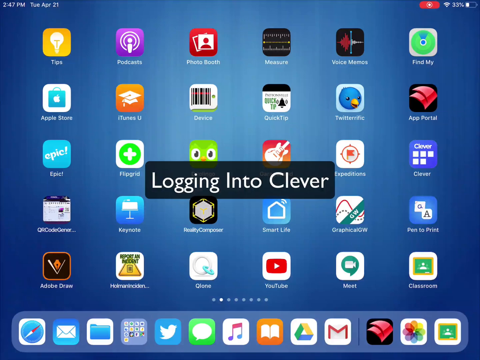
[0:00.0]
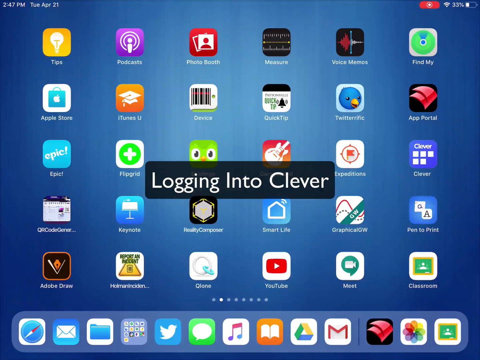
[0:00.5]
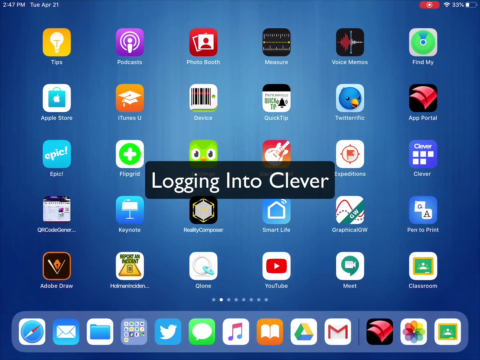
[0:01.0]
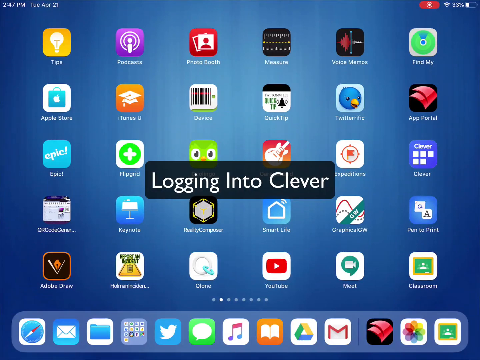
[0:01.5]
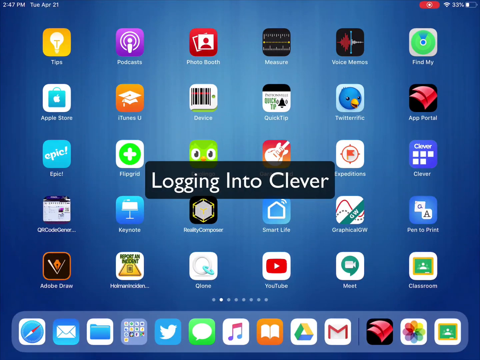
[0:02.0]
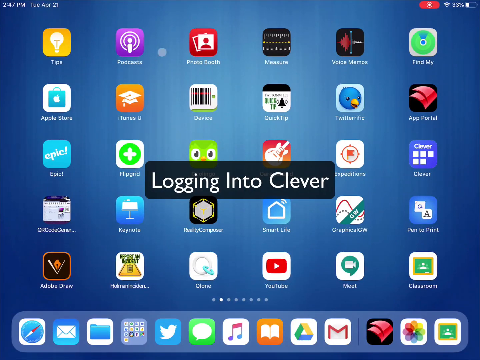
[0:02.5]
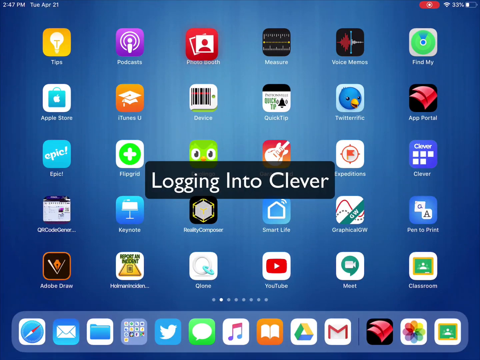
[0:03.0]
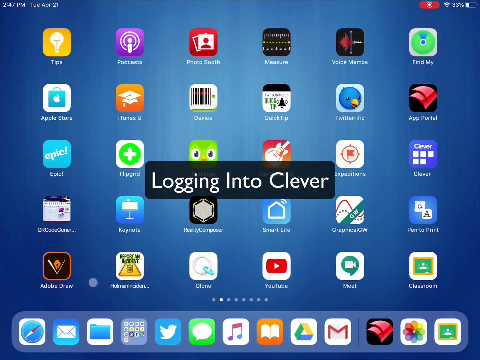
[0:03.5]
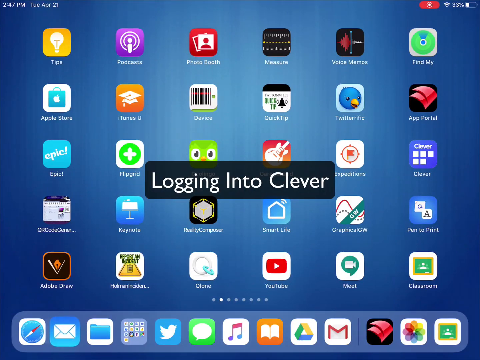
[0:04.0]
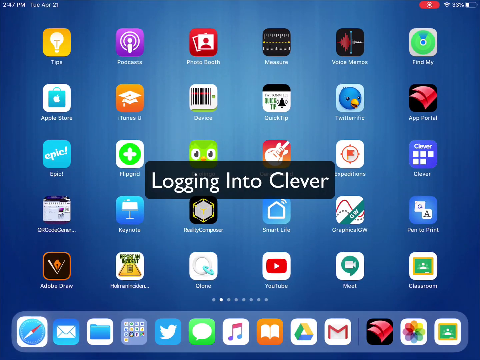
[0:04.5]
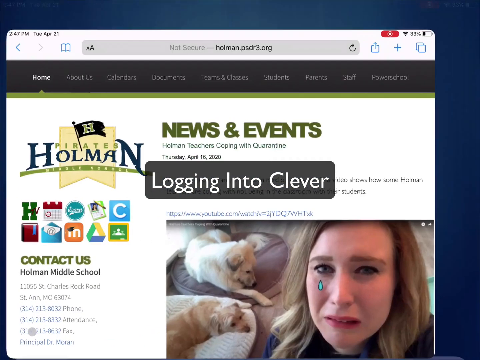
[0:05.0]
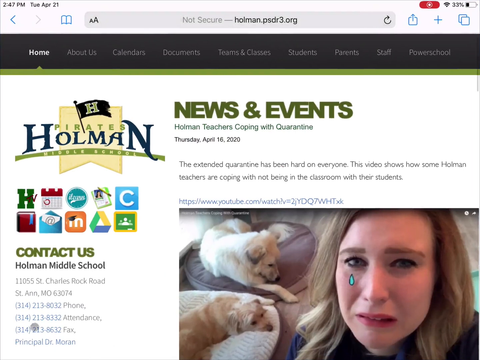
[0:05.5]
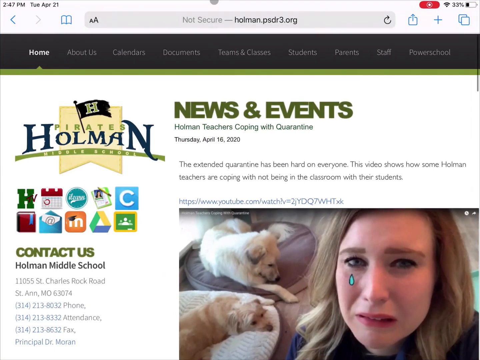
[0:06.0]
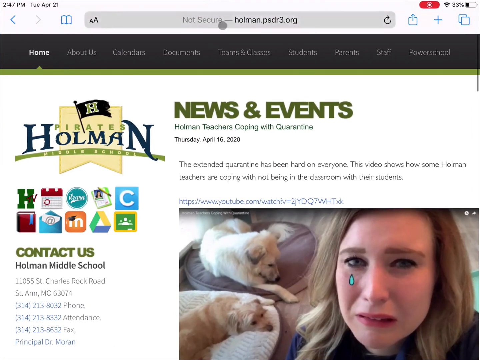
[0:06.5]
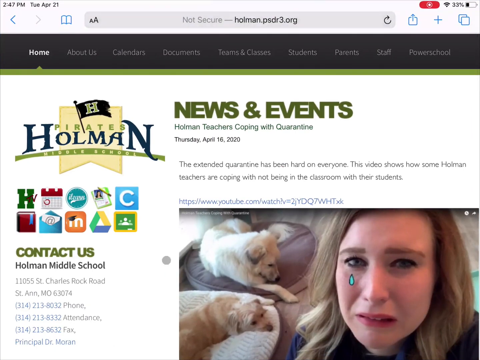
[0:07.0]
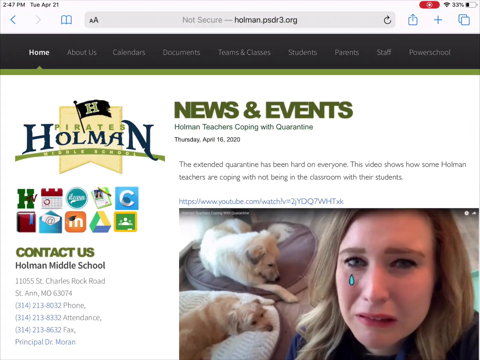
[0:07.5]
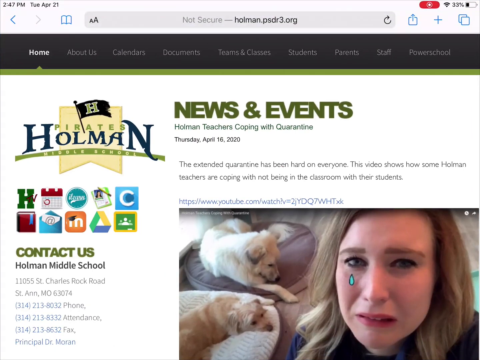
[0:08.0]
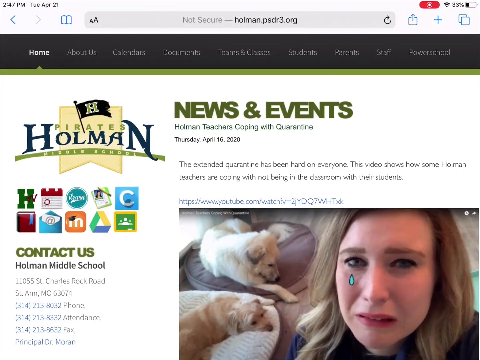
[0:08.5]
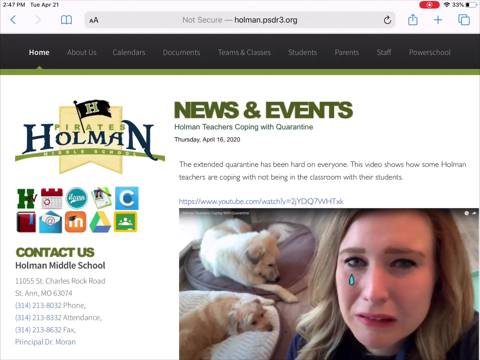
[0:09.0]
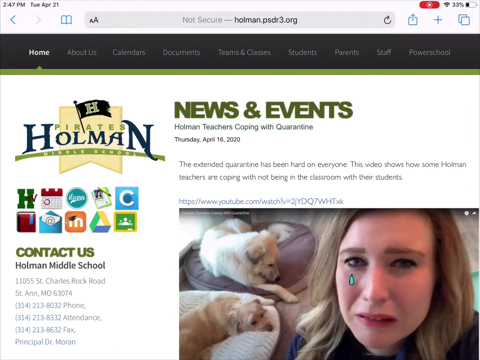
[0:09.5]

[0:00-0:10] On an iPad or MacBook, the dashboard shows a picture of a woman crying, with dogs in the background. Safari is used to log into an app called Clever, apparently to look for news and events. The dashboard displays Tuesday, April 21st, and the time 2:47 p.m., along with a Wi-Fi connection and a battery level of 33%. The background is blue. Other apps on the dashboard include Twitter, Apple, podcast and teach. Items for news and events, private and home also appear. The woman in the picture is apparently quarantined and crying that the quarantine is hard on her.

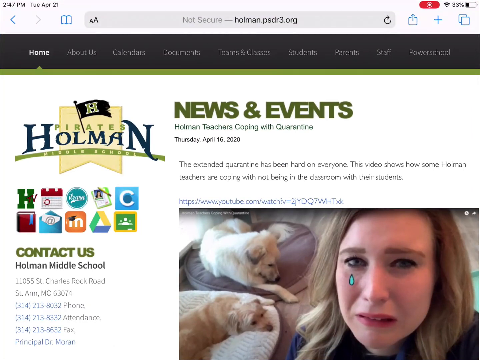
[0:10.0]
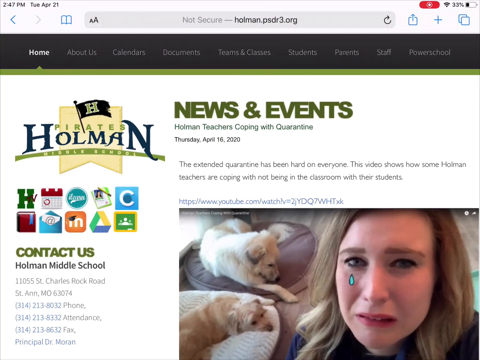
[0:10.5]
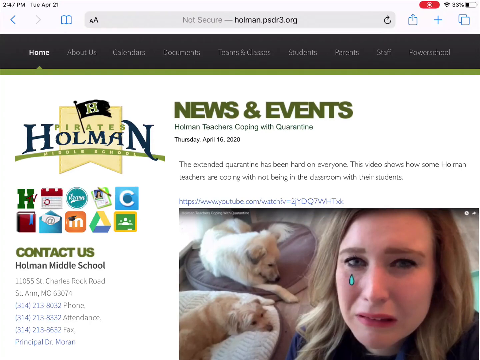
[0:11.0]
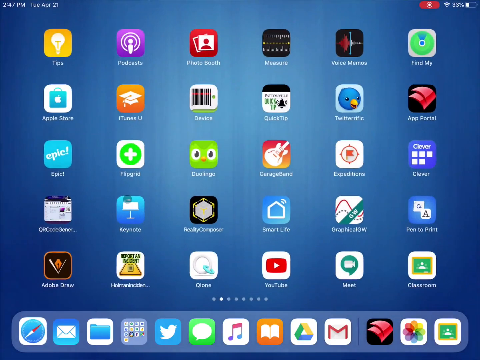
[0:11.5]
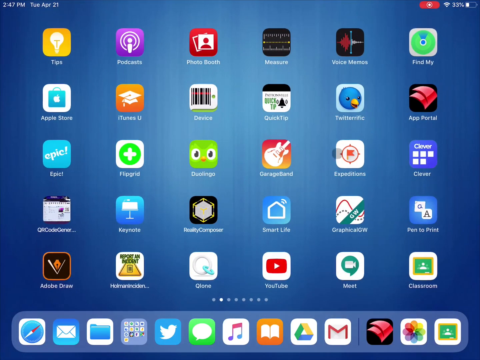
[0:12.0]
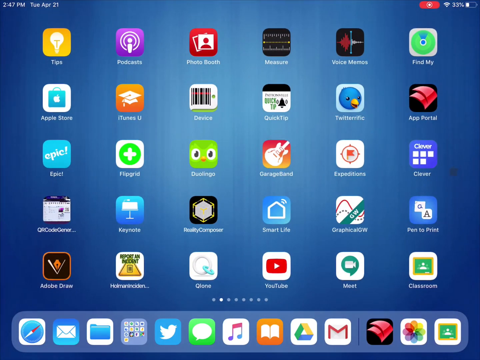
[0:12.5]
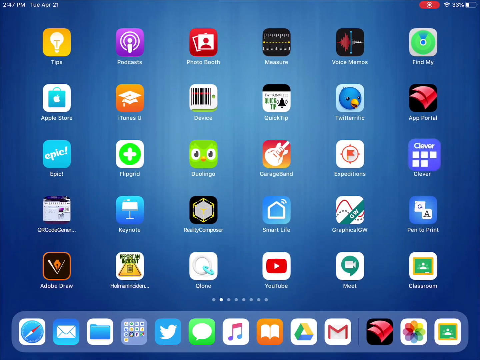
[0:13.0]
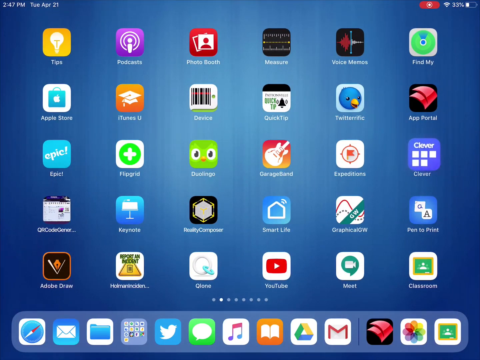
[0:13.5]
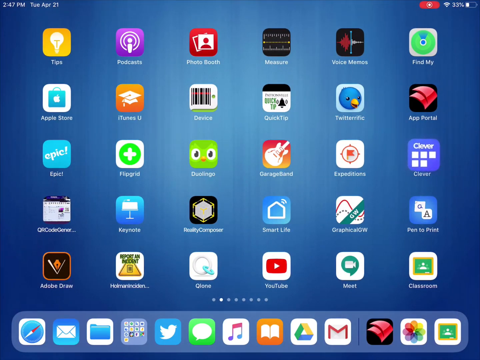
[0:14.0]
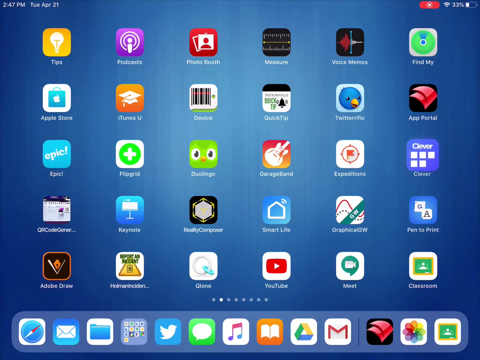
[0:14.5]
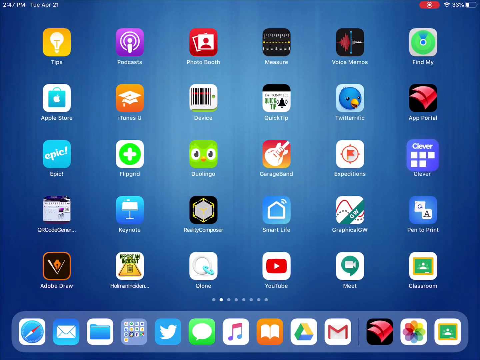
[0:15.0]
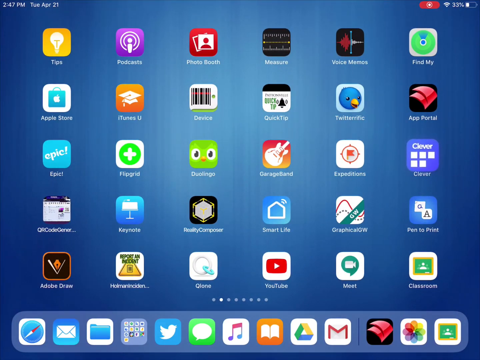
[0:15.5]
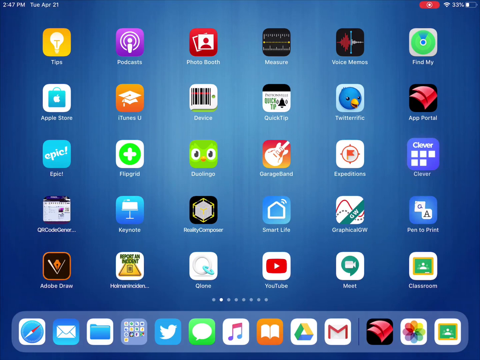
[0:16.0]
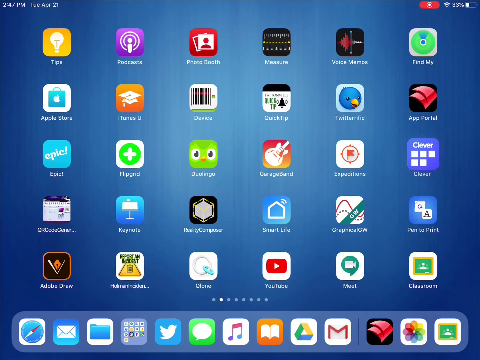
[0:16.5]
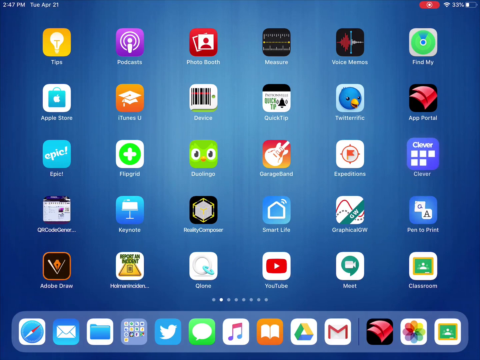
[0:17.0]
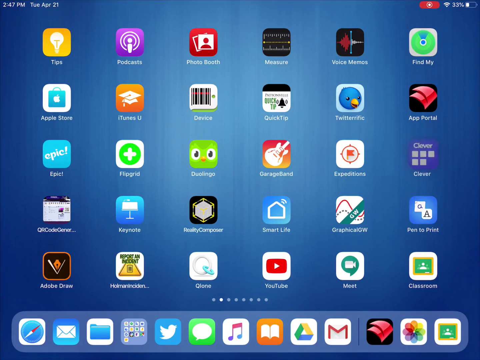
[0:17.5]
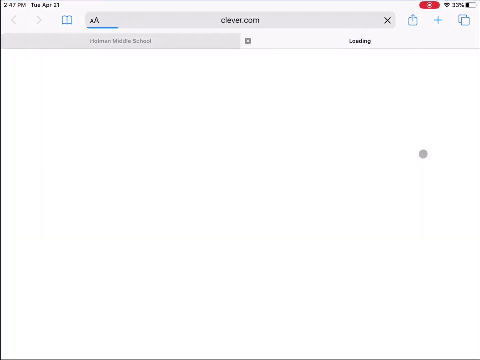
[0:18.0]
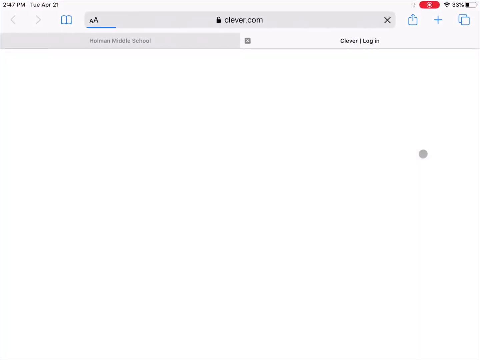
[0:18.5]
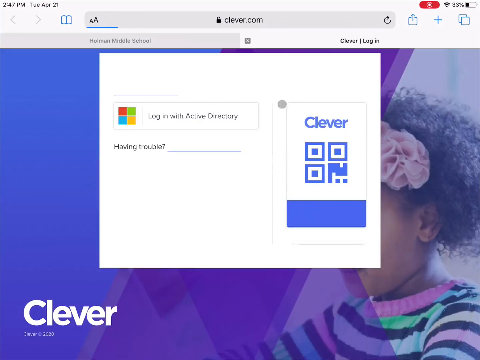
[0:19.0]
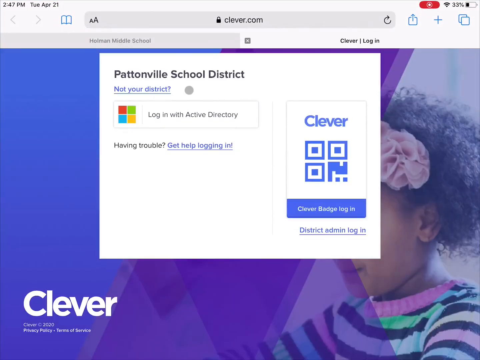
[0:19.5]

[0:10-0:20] The dashboard of a MacBook is shown as someone logs into the app Clever. A picture of a woman crying pops up. To the side, "Pirates Home" is written, and there are references to contacting the school and to Middle School. In bold text it reads "the extended quarantine has been hard on everyone."